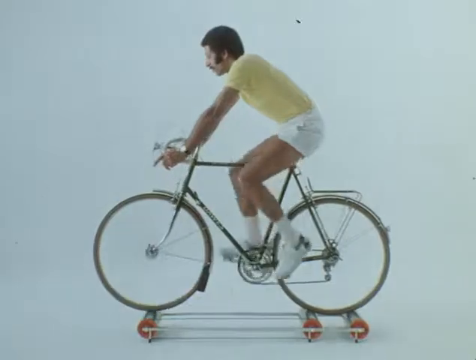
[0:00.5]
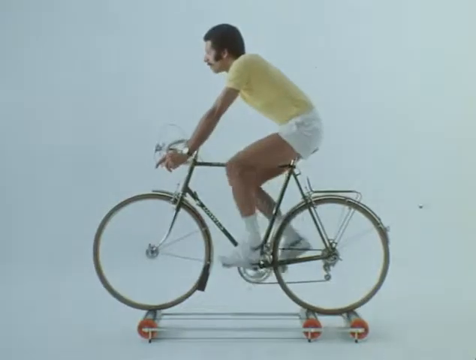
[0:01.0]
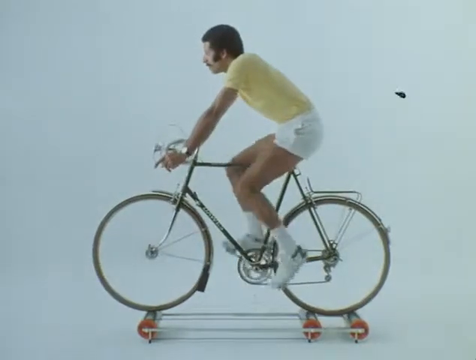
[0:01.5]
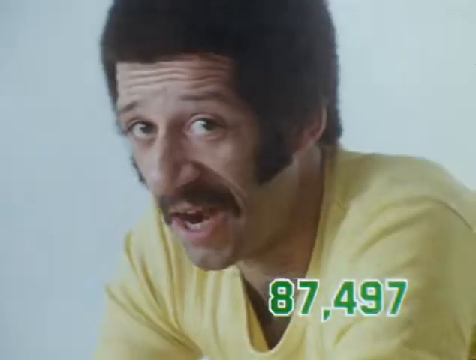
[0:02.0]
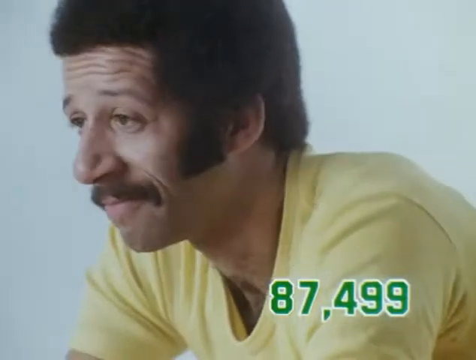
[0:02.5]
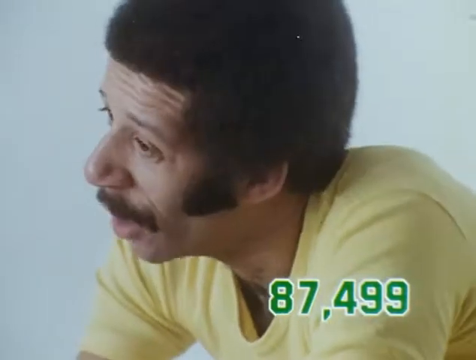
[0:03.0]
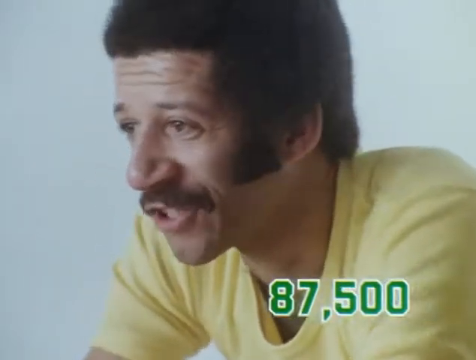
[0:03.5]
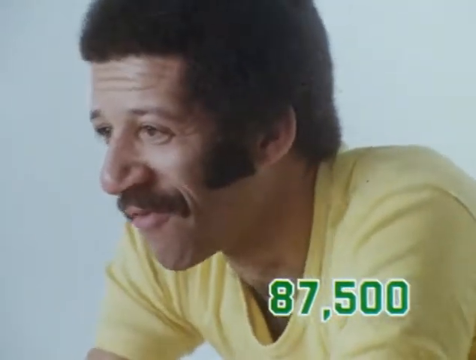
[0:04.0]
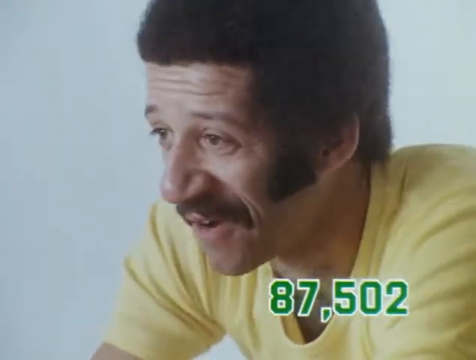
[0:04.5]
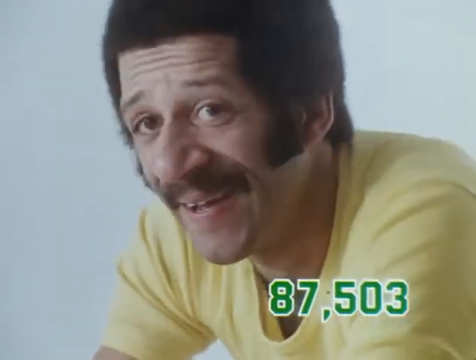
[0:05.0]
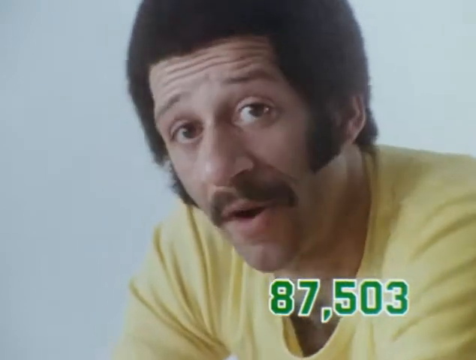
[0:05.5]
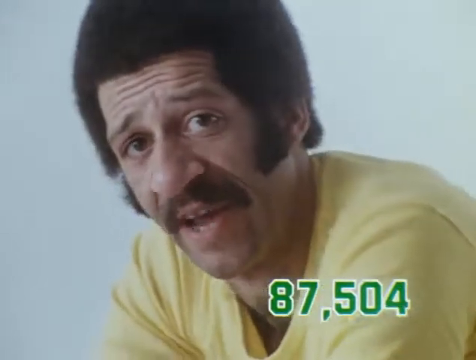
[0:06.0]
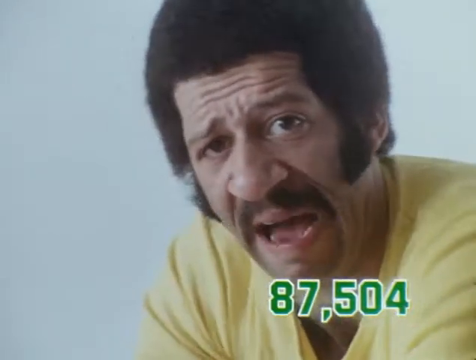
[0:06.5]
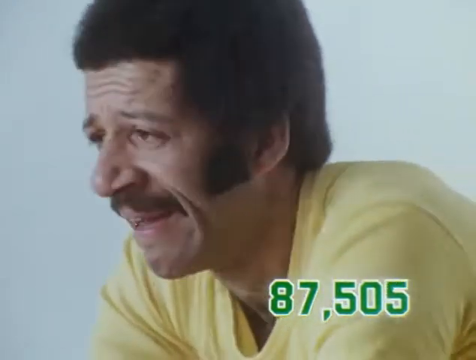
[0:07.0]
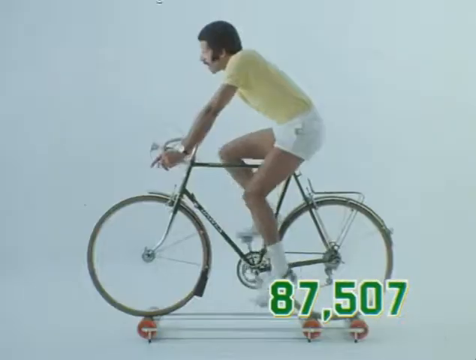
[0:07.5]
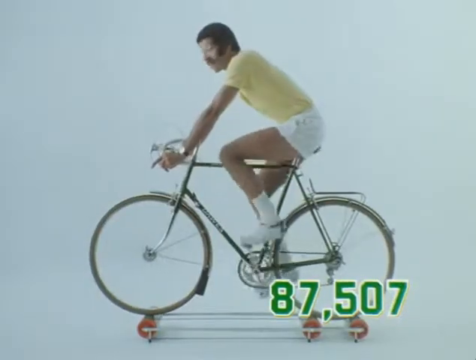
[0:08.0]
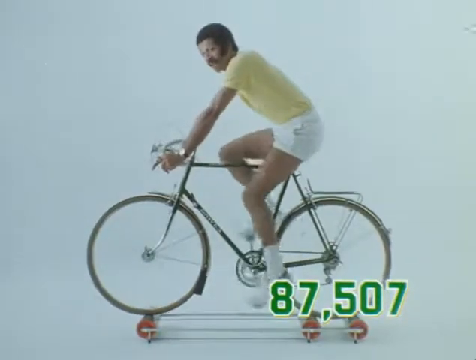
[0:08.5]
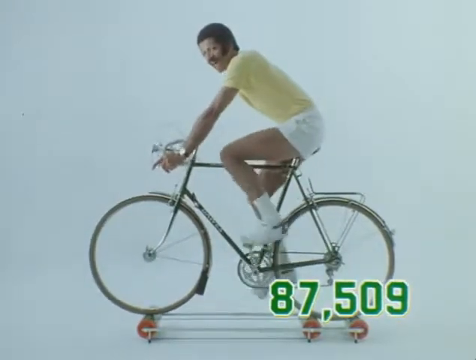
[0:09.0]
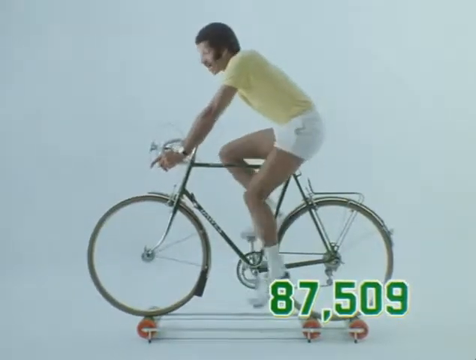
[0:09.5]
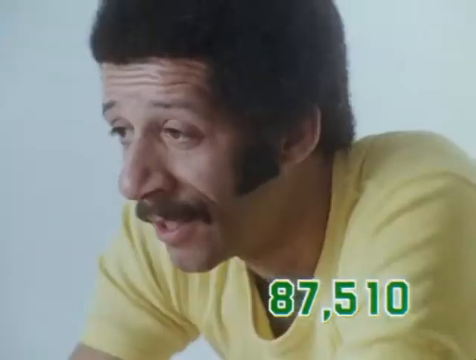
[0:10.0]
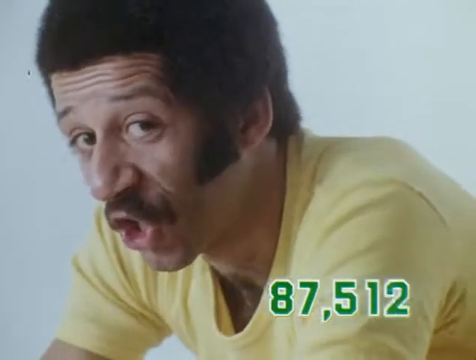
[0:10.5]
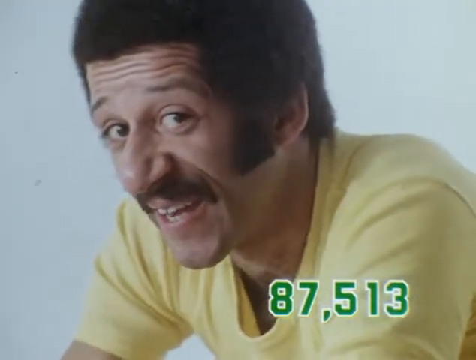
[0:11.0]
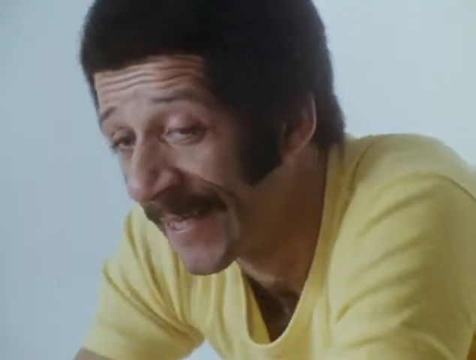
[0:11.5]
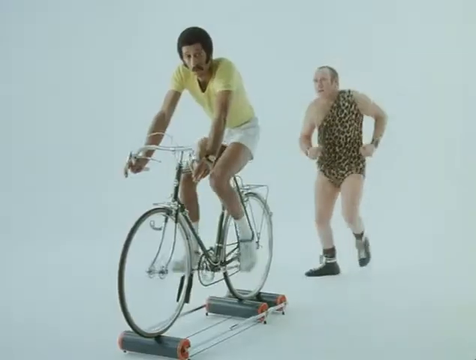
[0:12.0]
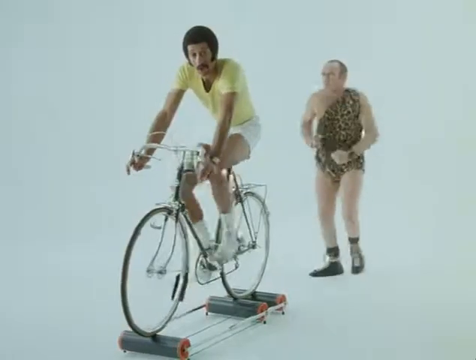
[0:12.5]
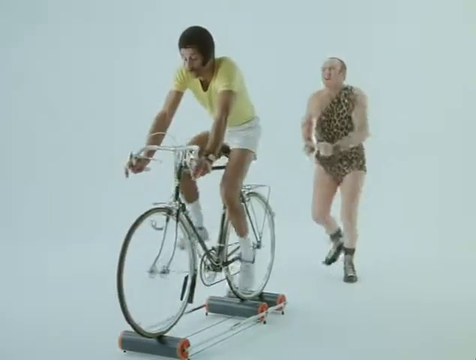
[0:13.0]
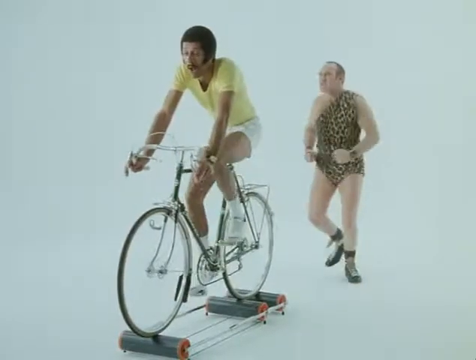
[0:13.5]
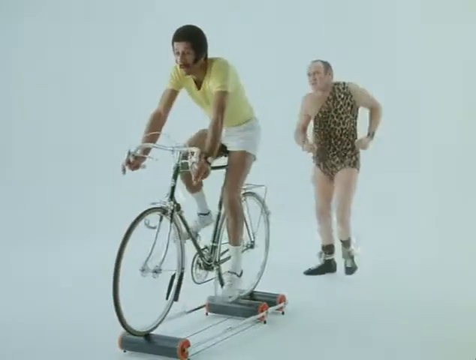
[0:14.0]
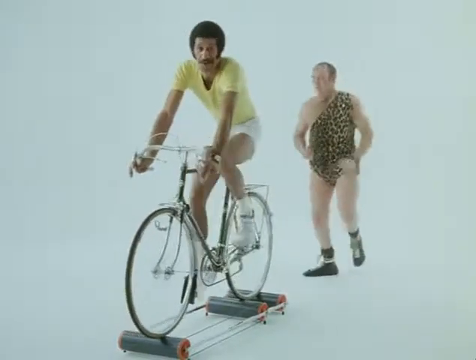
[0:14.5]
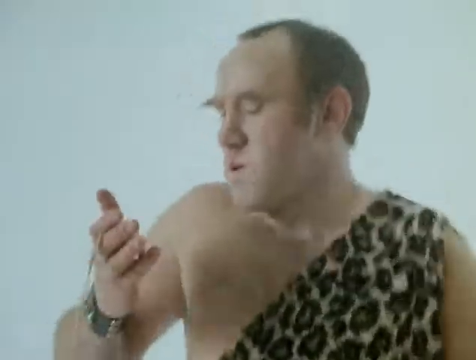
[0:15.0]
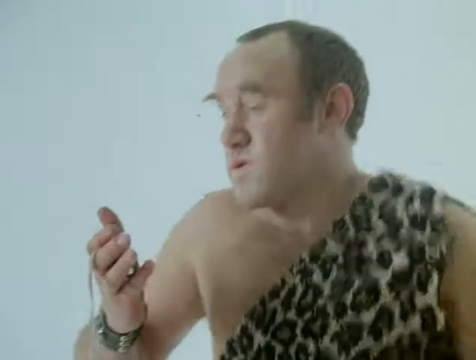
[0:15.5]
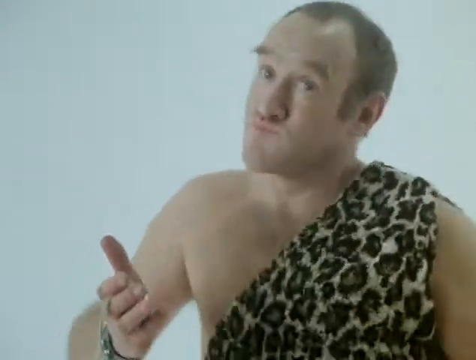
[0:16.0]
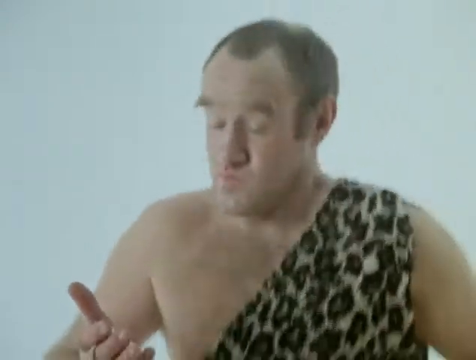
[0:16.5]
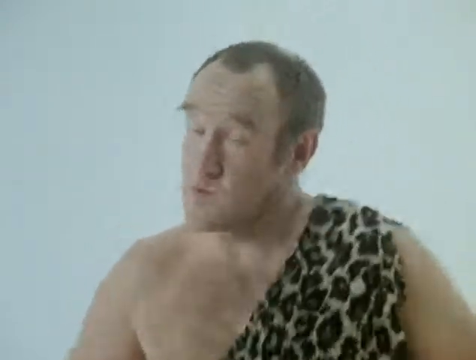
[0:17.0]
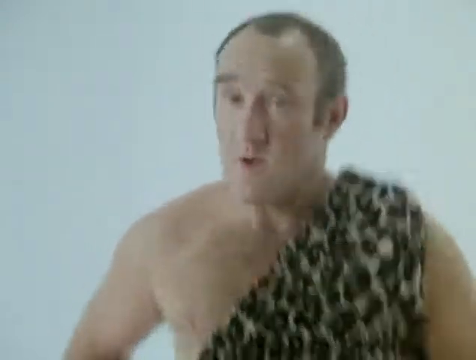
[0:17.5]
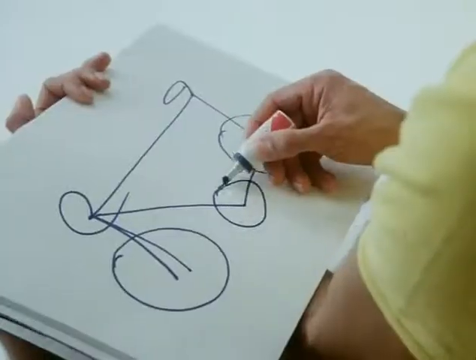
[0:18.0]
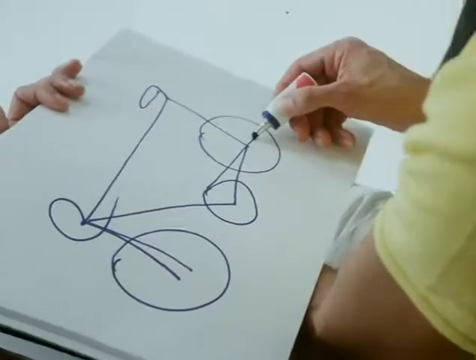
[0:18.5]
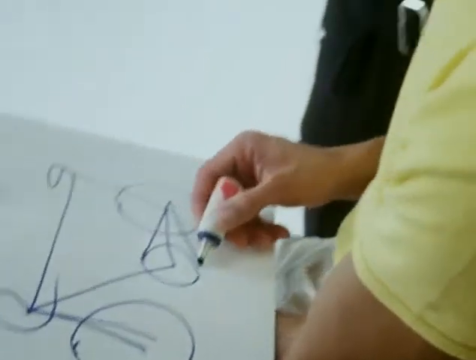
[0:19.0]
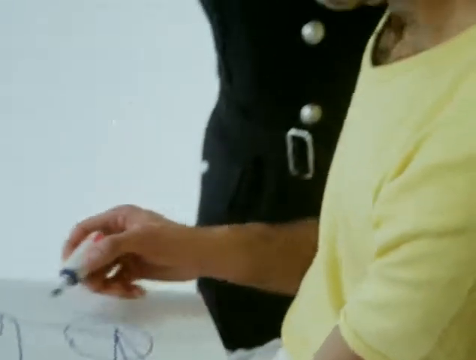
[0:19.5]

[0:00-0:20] A Black man in a short-sleeved, very light yellow polo shirt, white shorts, white socks and white tennis shoes faces left of the screen, pedaling a bicycle on an indoor bicycle-type mount that allows for pedaling and lets the rear wheel operate inside a building. The bike appears to be a 26-inch, drop-handlebar-style bicycle, and it has a bike rack on the back above the rear wheel. The background is light gray. He pedals and looks at the camera. In a close-up, he turns and glances at the screen. A number in the bottom right begins at 87,497 and counts upward as the view returns to a full shot of him pedaling. At the end of the pedaling, the final readout in green font in the lower right of the screen is 87,513. The scene then shifts to a frontal side view, at an angle, of the indoor pedaling. Behind him is a man in a leopard-skin type of bodysuit with short legs; the suit crosses over his left shoulder, leaving his right shoulder and arms, his left outer shoulder and arm, and his legs bare. He wears what appear to be boxing-type shoes, like those boxers wear in the ring. He has a receding hairline and light brown hair, and he jogs while holding a stopwatch and looking at it. An over-the-shoulder view then shows the man who was on the bicycle sketching the bicycle setup with a magic marker on a white cardboard sheet, held by his left hand atop his left forearm. He holds the marker between his thumb and right fingers, facing left, as the camera pulls back.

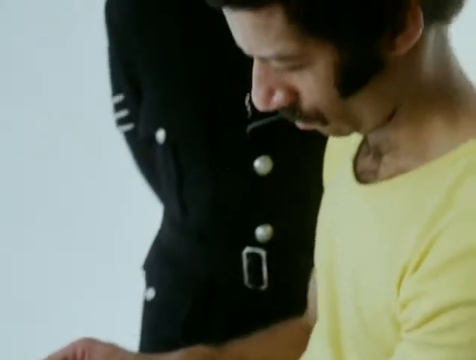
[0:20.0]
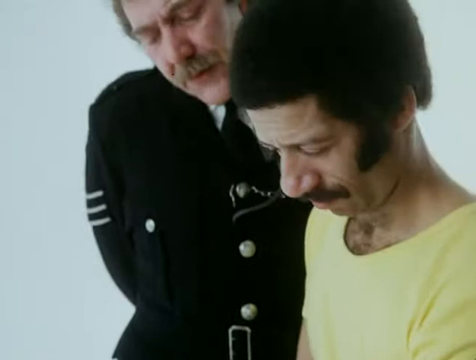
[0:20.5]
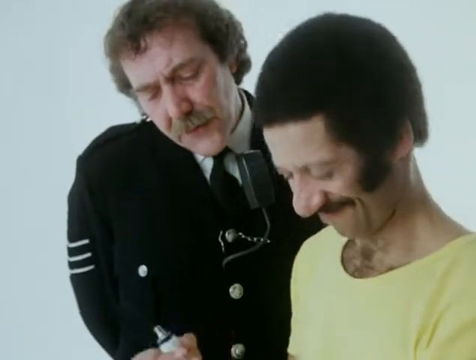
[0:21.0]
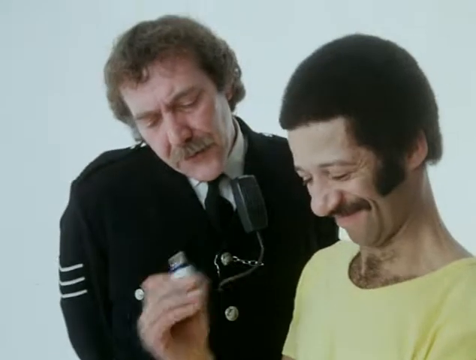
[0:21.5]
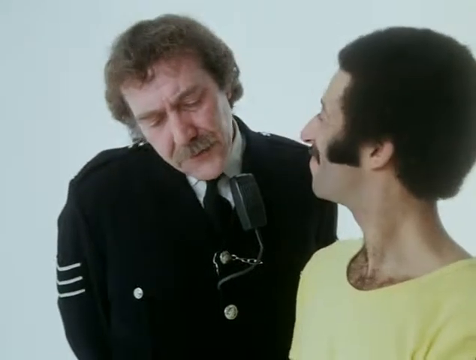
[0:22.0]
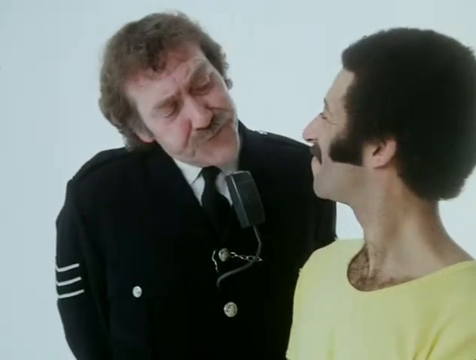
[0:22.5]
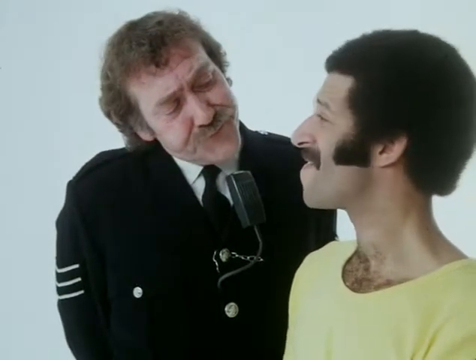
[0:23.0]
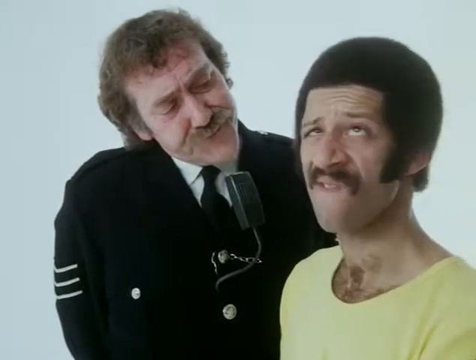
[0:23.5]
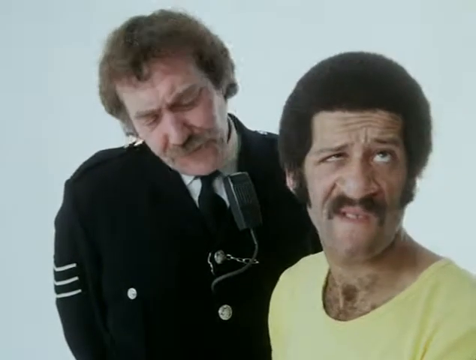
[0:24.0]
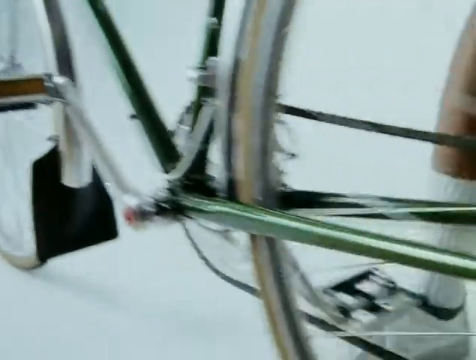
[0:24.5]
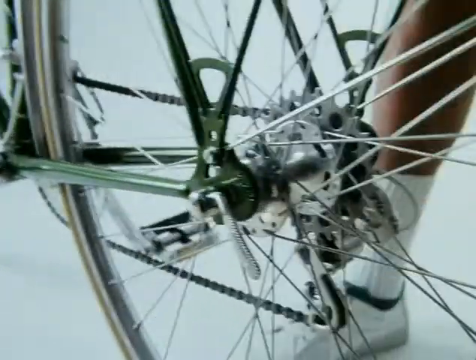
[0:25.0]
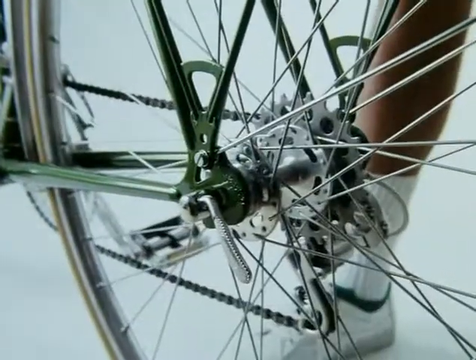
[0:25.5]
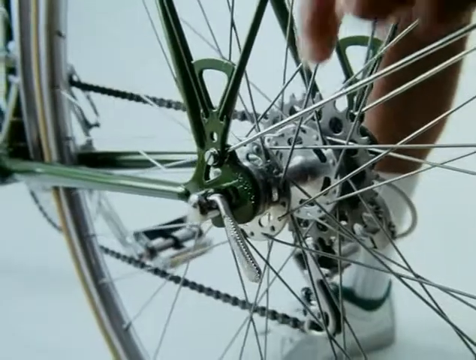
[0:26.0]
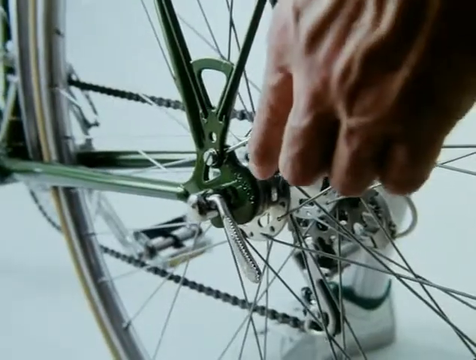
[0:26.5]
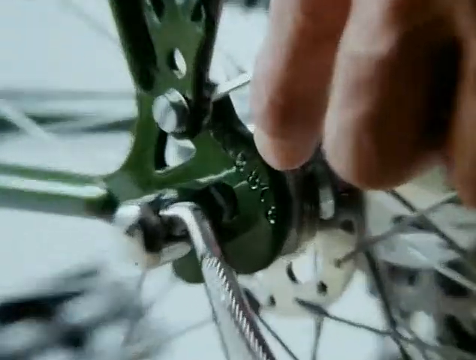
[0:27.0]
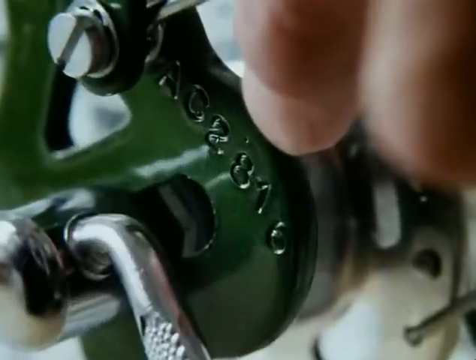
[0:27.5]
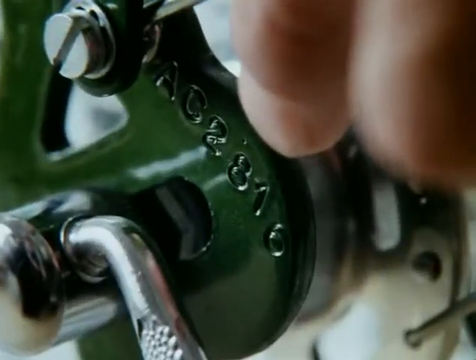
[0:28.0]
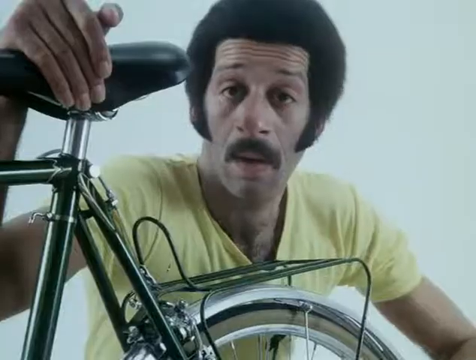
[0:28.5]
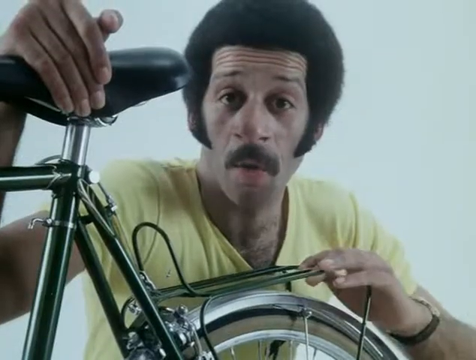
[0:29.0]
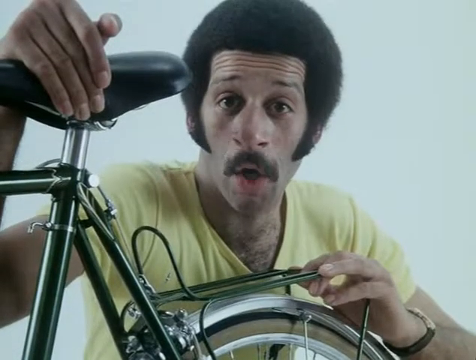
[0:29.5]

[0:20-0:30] The man who was riding the exercise bicycle sketches the bicycle setup in stick-figure fashion on a white sheet of cardboard, using a vintage-style magic marker. He holds the cardboard on his left forearm and sketches with his right hand. The camera pulls upward from the sketch and zooms up to reveal what appears to be a British-style police officer with brown, curly hair and a mustache, standing to the left of the man on screen. The man in the yellow top turns away and looks up nervously, while the officer, at screen center, smirks and looks down at him. A zoomed view then shows the bicycle's rear hub, the center of the rear wheel where the spokes meet and where the derailleur gears are. The man points to serial numbers engraved on the frame area that attaches to the hub of the rear wheel; the numbers read "AC2816" and are engraved into the green portion of the frame at the center of the rear wheel. The man, who was riding the bicycle, then squats behind the rear wheel facing the camera, speaking to the viewer, holding the bike rack above the rear wheel with his left hand and with his right hand positioned over the seat, in a zoomed shot from the center of the screen. The view returns to the British police officer looking down at the sketch, as the rider sits facing left, sketching the bicycle, smiling and turning to the officer; both seem to somewhat agree on the progress of the sketch. A second zoom-in shows the serial number "AC2816" engraved on the green area of the frame near the rear hub.